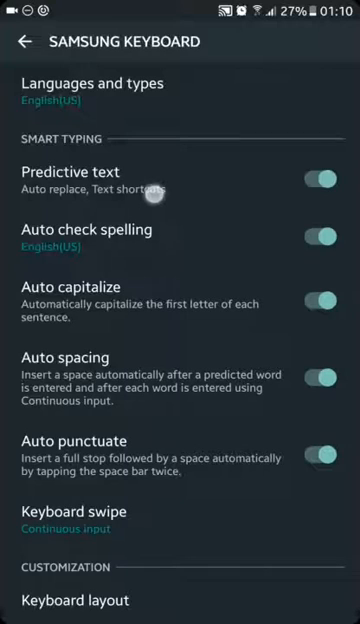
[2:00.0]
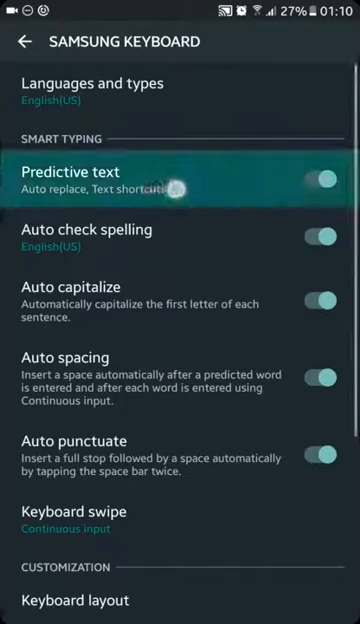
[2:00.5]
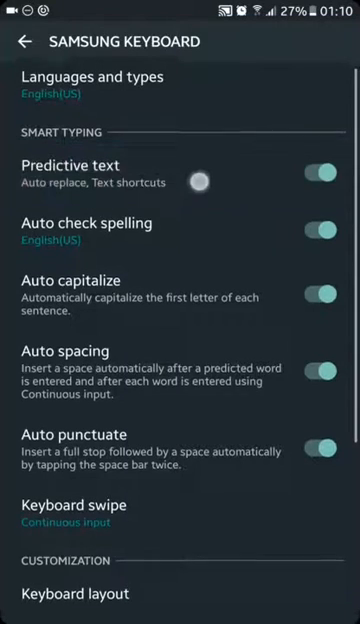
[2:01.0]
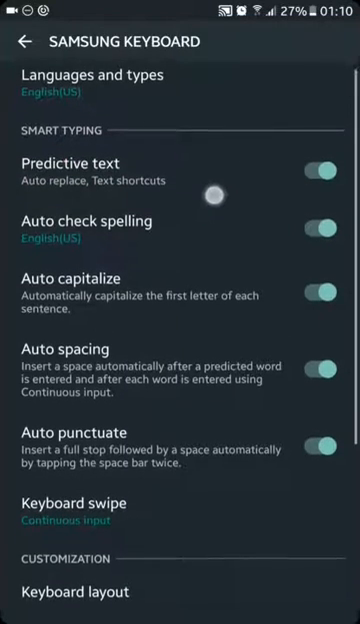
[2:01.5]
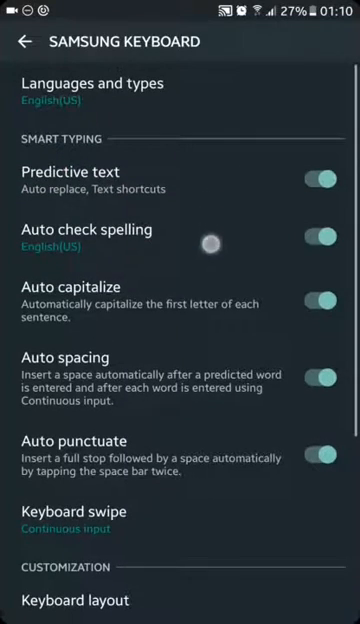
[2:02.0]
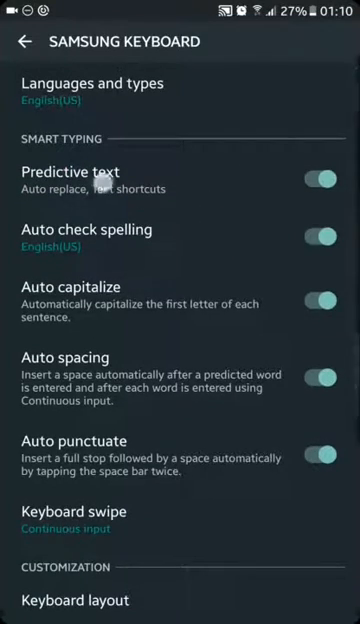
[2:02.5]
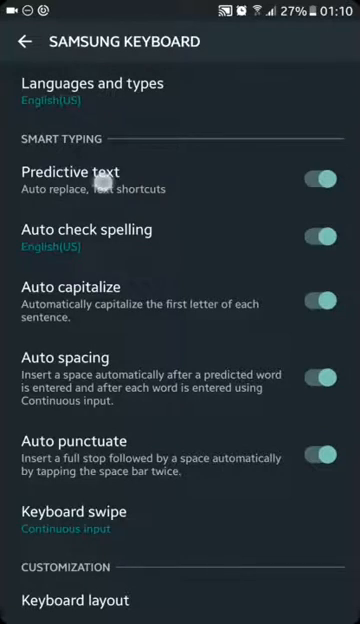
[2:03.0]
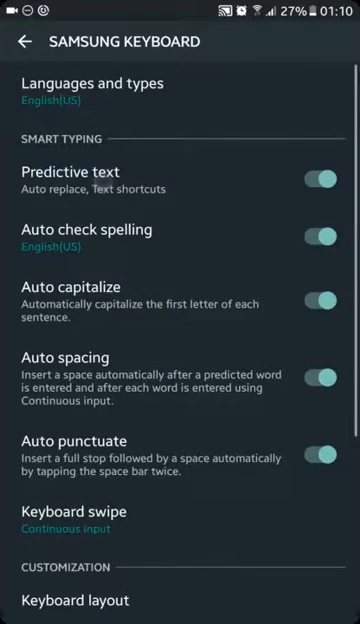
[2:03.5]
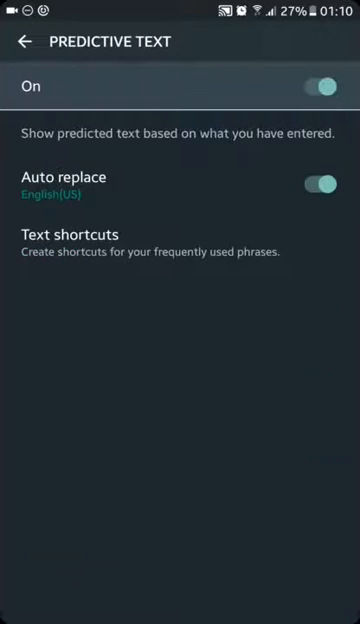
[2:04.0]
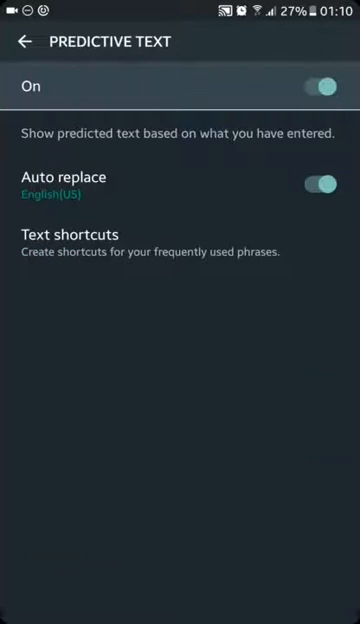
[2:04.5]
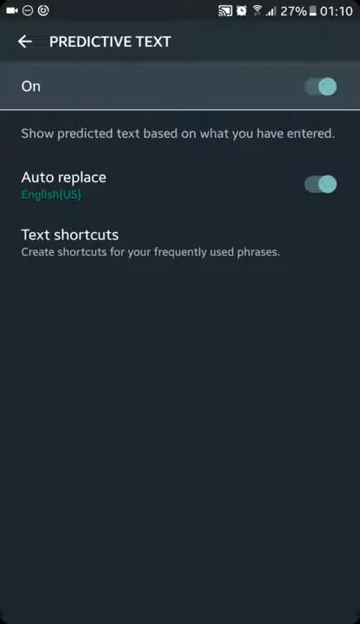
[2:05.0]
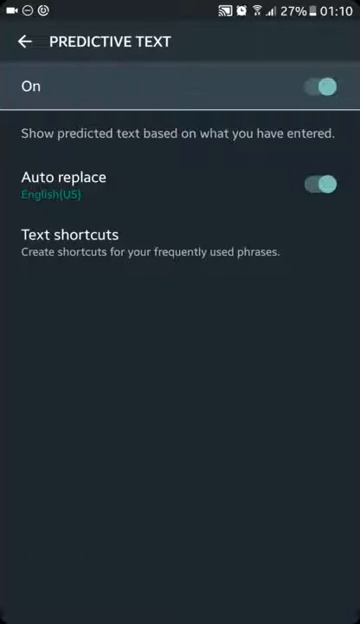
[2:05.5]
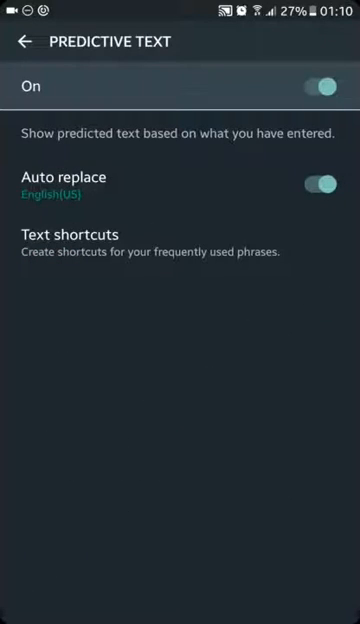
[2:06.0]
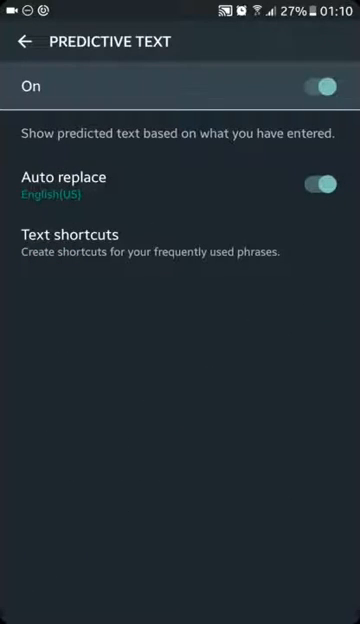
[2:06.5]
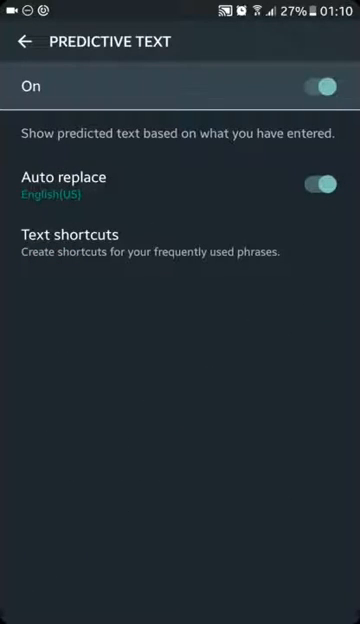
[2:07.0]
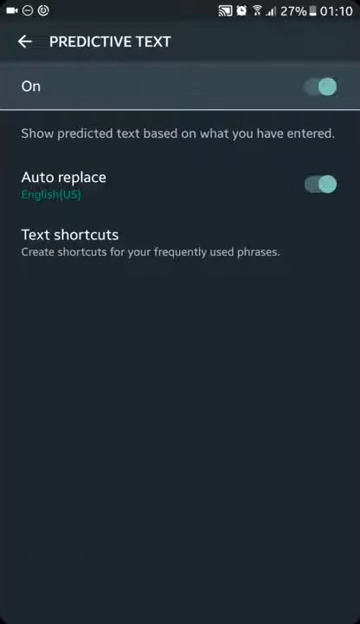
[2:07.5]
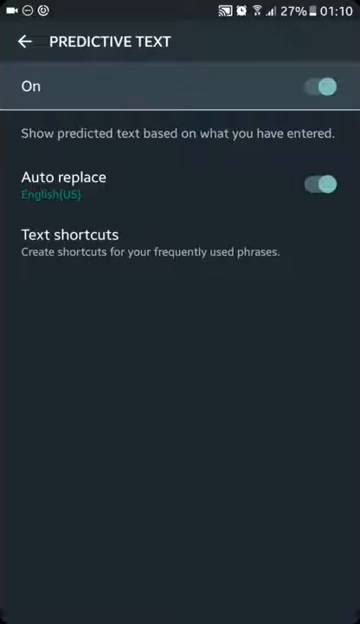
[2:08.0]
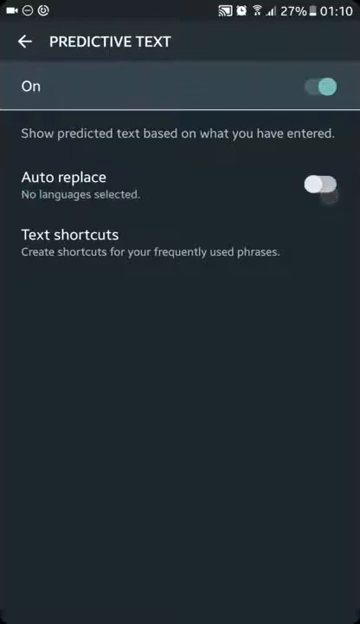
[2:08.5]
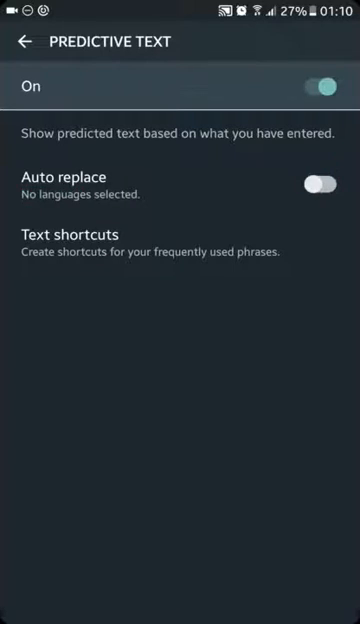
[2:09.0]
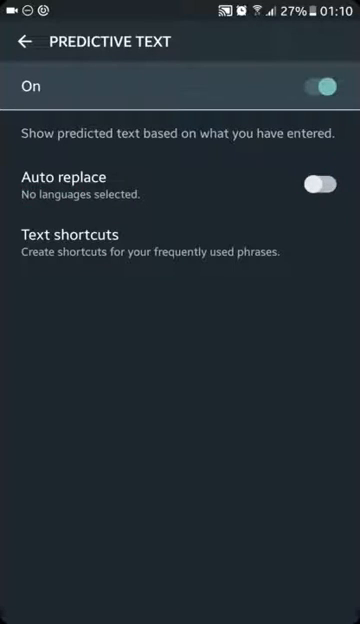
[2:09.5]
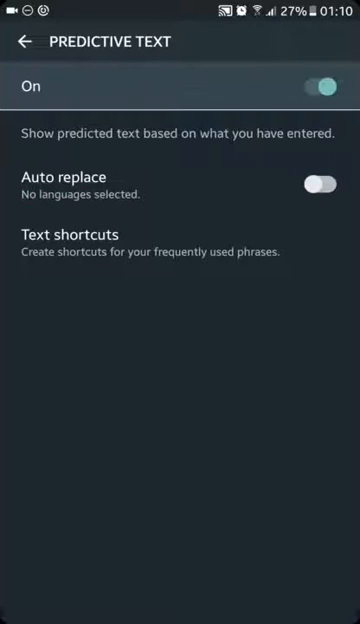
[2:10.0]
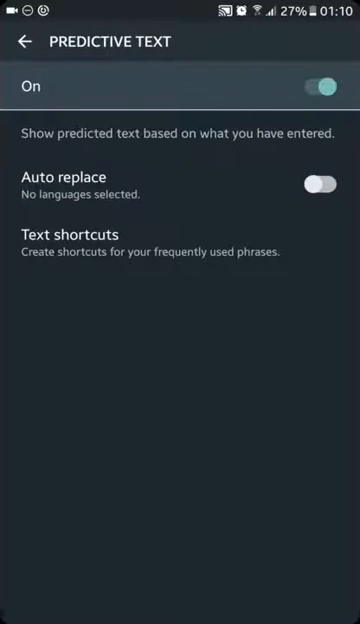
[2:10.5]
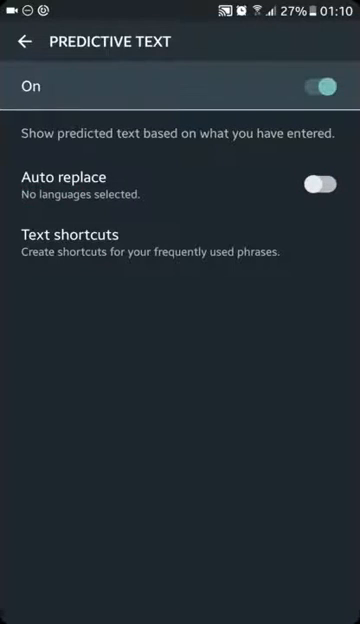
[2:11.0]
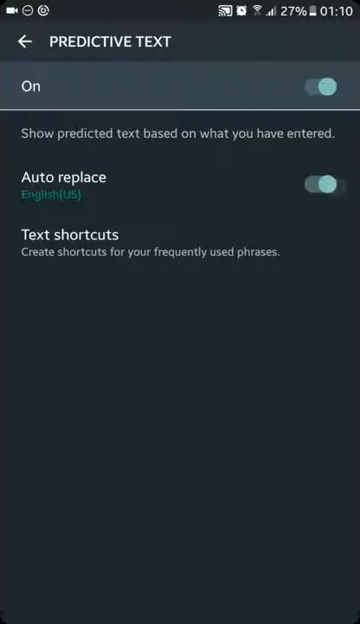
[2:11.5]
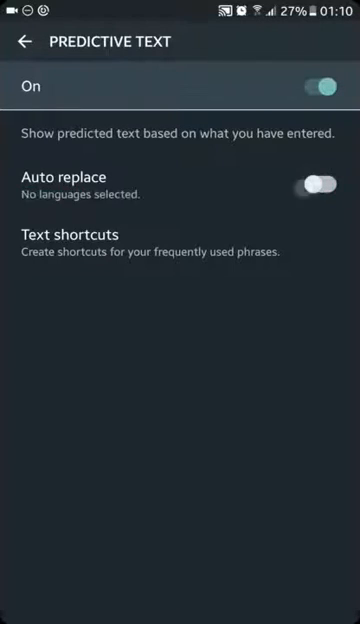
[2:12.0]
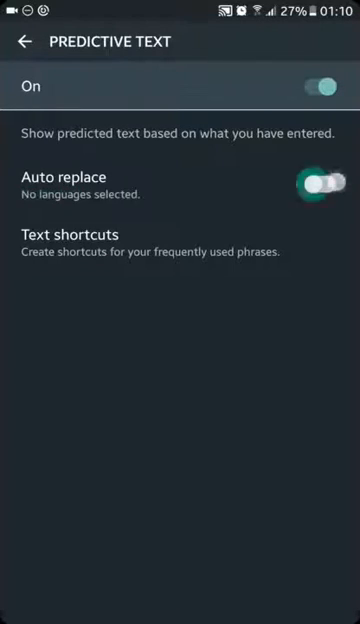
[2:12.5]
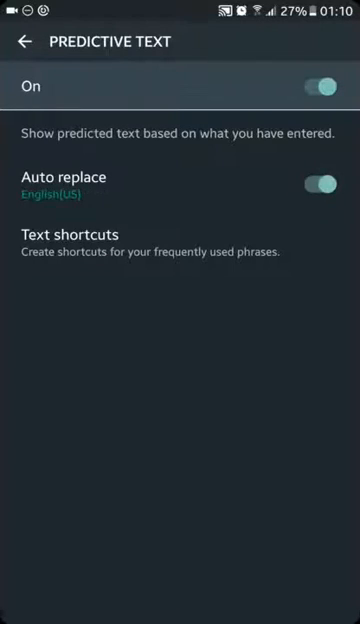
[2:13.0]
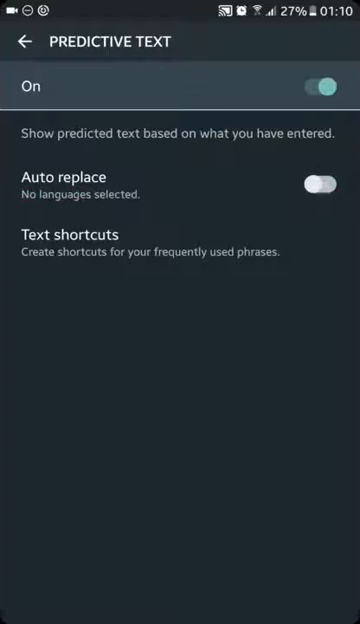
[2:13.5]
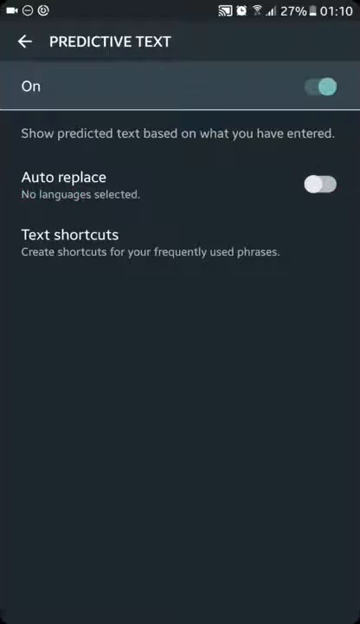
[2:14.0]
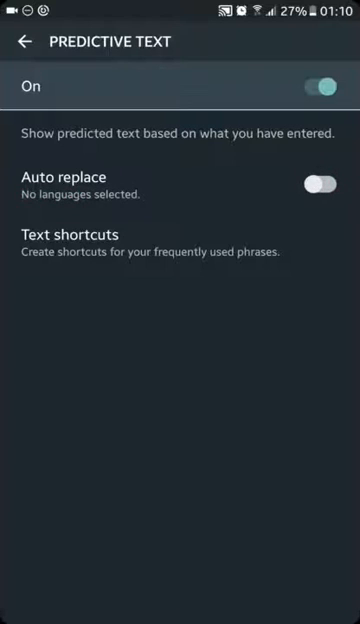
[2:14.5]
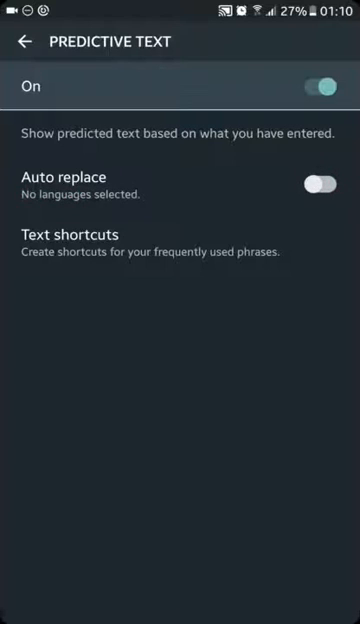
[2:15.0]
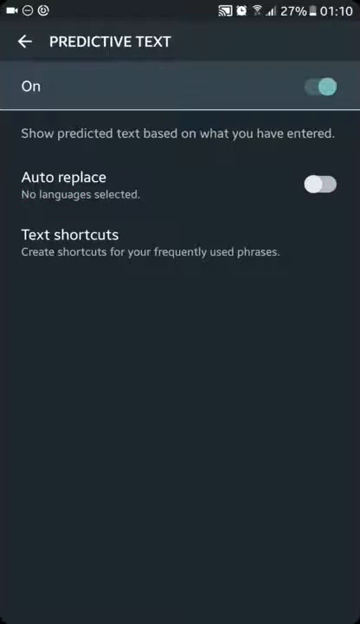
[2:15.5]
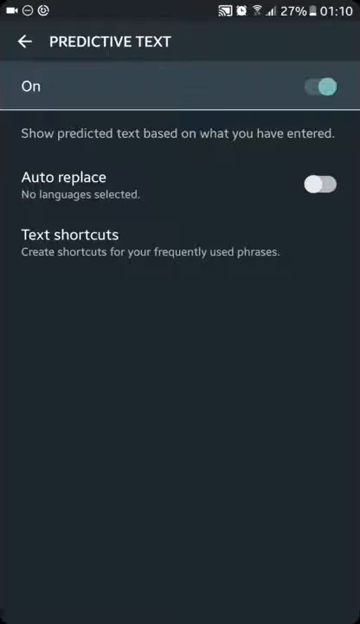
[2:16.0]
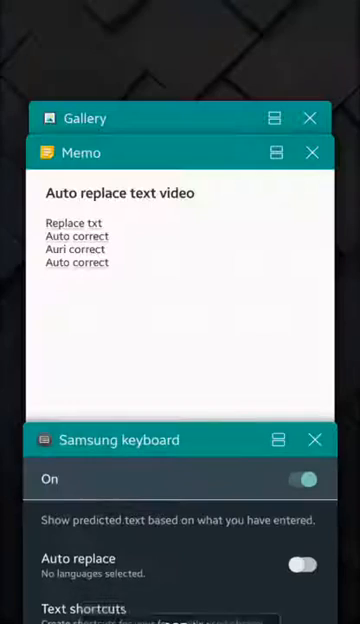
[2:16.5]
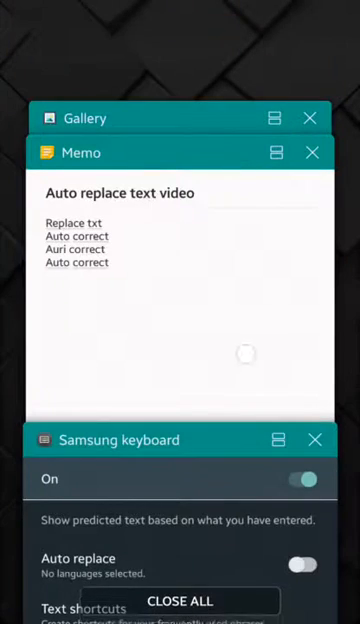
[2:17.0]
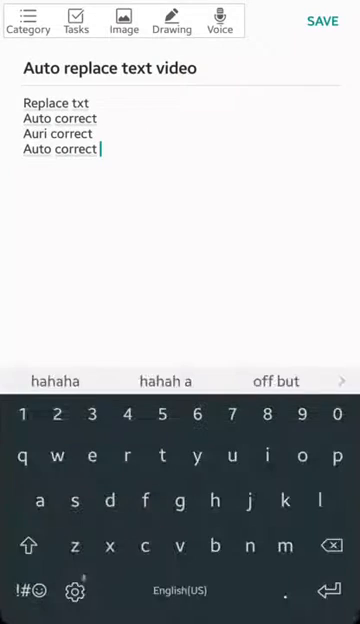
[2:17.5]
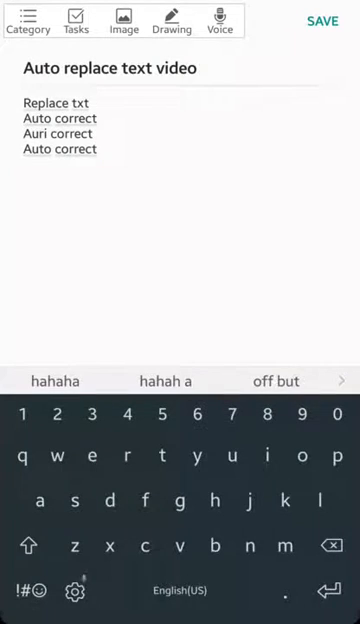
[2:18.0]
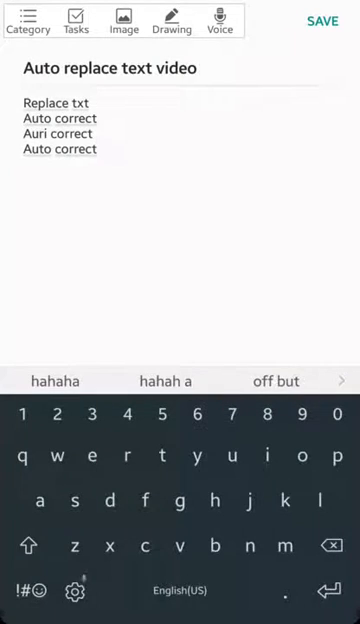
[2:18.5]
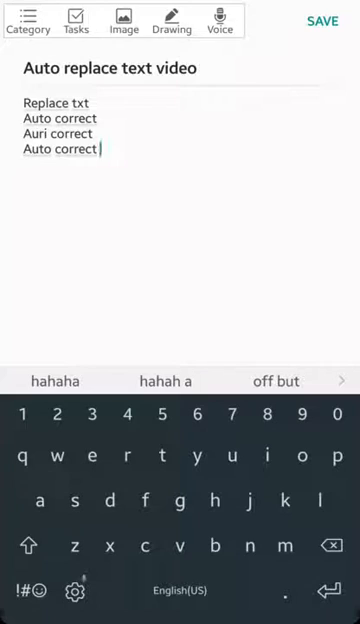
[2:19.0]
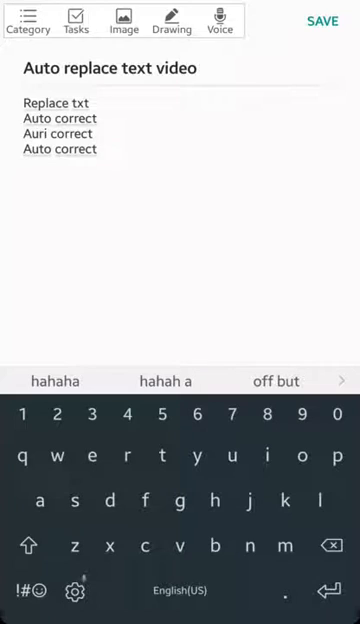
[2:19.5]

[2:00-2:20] The user is over the predictive text category in smart typing, and the whole category is now highlighted green. The user clicks on it, opening options: "on," which is toggled on, with "show predicted text based on what you've entered" below it. Below that is an auto-replace toggle button that is on, with the language English, and then "text shortcuts" with the description "create shortcuts for your frequently used phrases." The user toggles auto-replace off and on repeatedly, selecting and deselecting it three times. The user then goes back to the memo screen and stays there, without typing anything else.